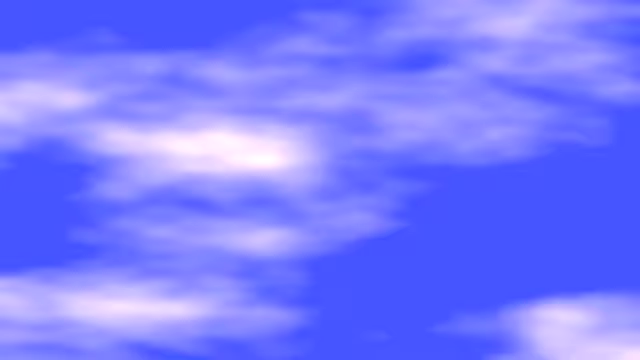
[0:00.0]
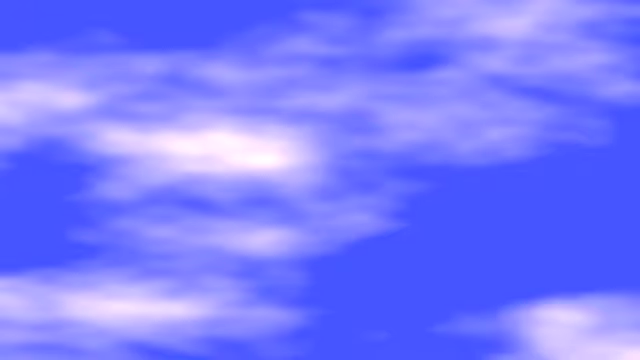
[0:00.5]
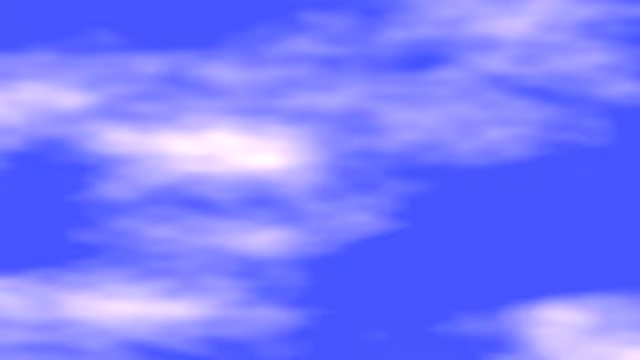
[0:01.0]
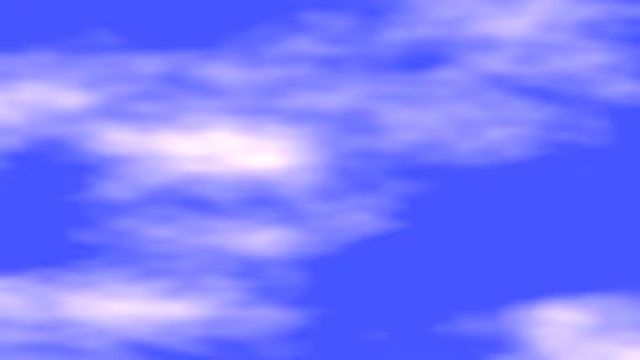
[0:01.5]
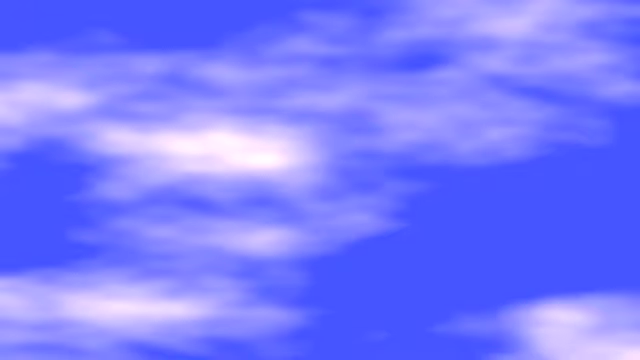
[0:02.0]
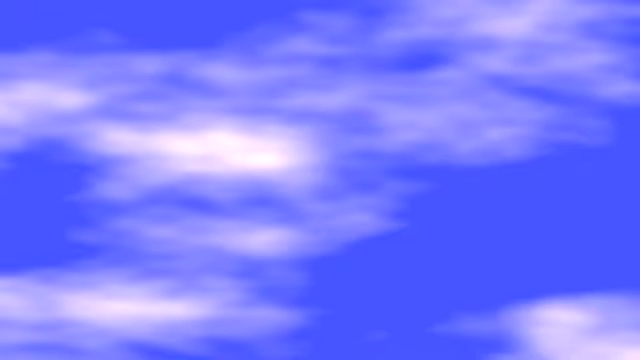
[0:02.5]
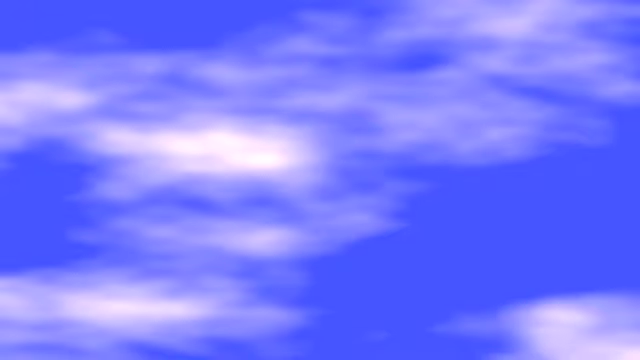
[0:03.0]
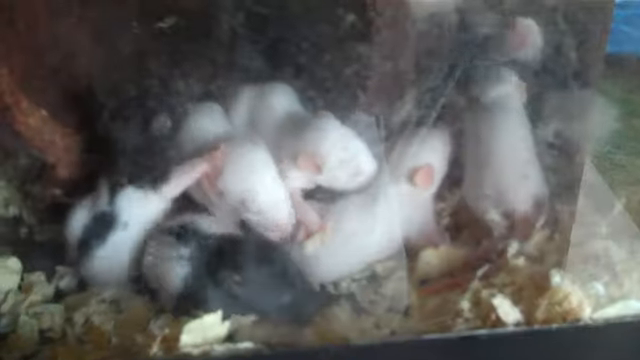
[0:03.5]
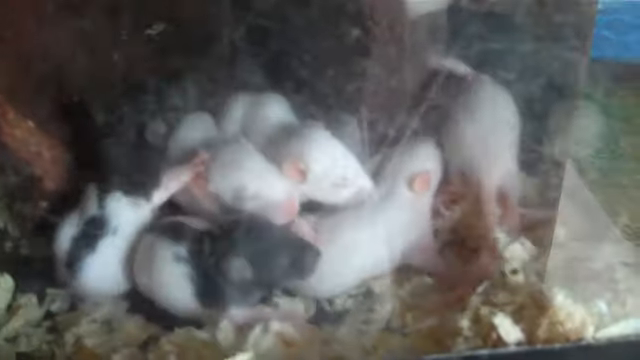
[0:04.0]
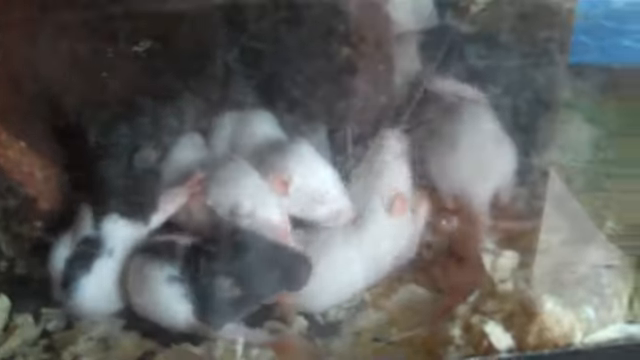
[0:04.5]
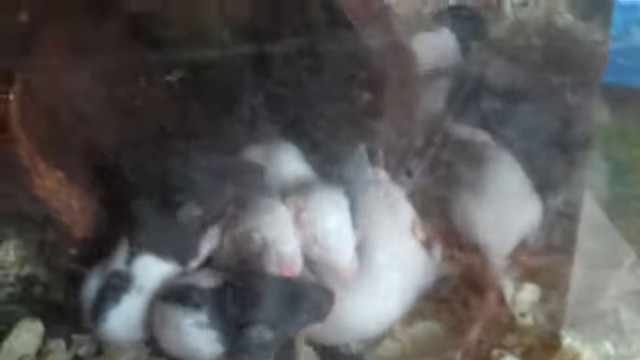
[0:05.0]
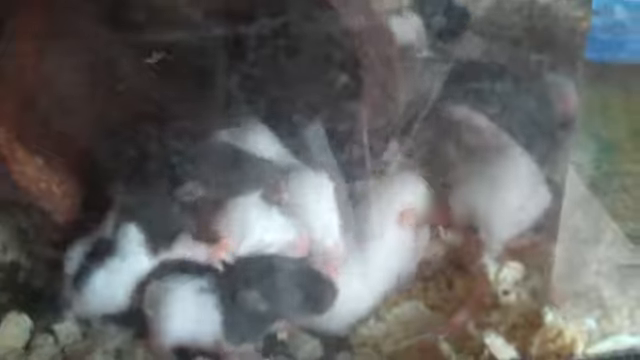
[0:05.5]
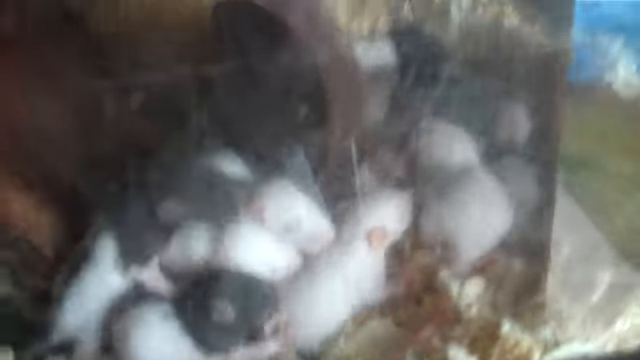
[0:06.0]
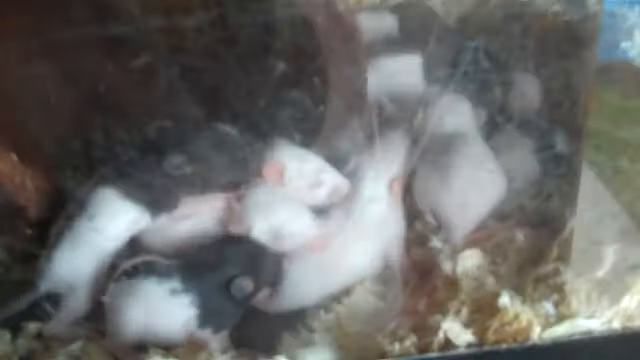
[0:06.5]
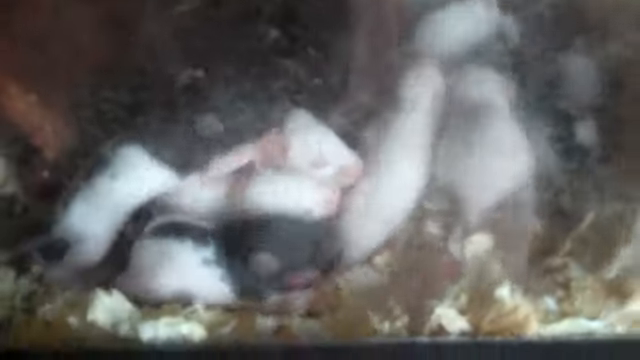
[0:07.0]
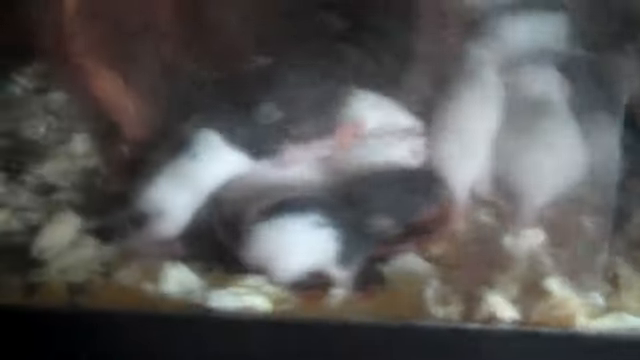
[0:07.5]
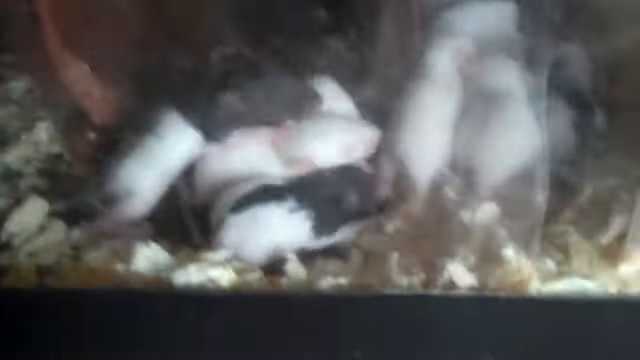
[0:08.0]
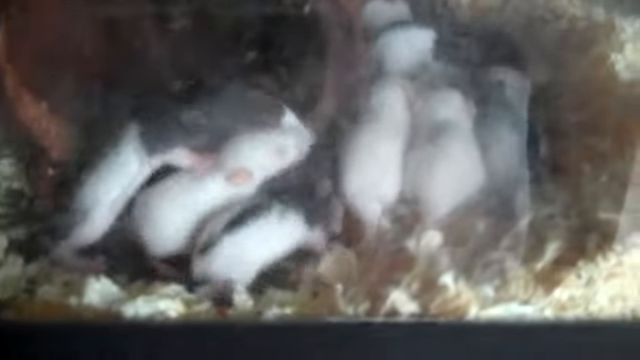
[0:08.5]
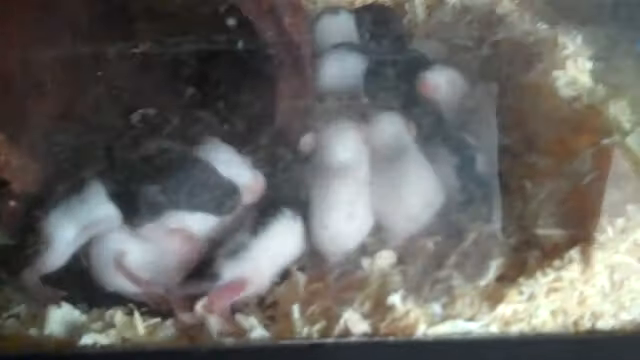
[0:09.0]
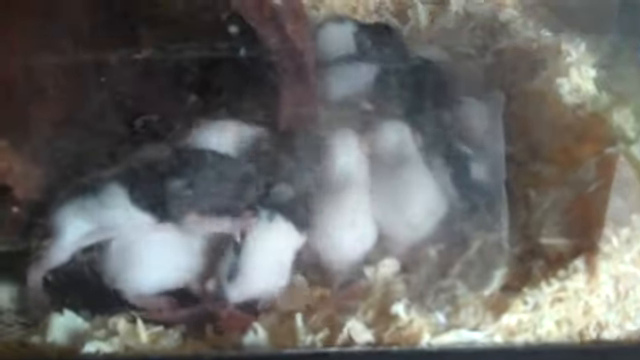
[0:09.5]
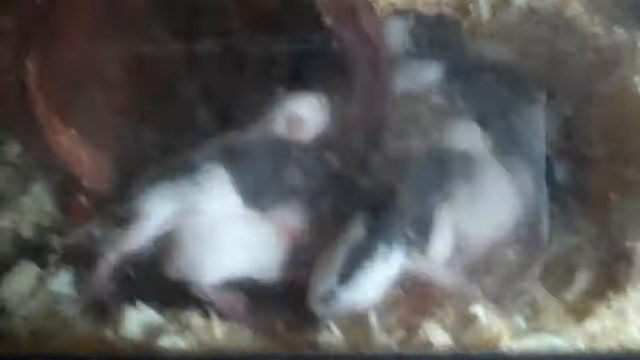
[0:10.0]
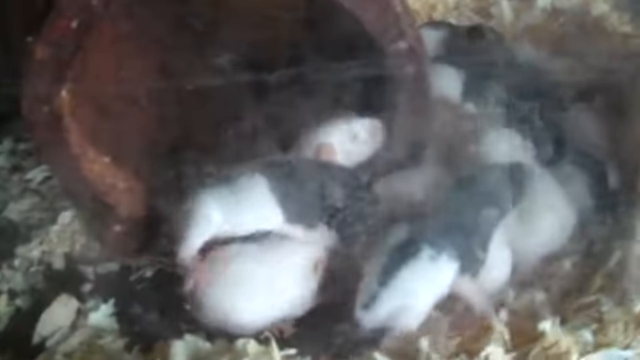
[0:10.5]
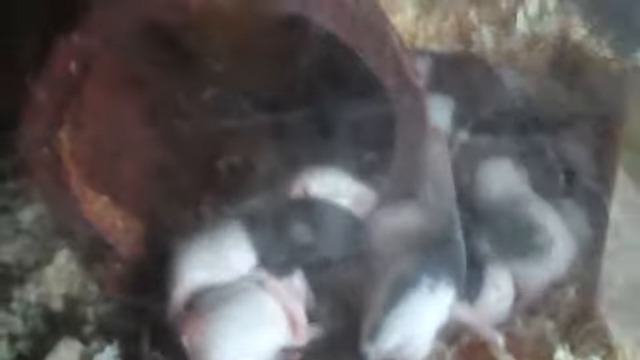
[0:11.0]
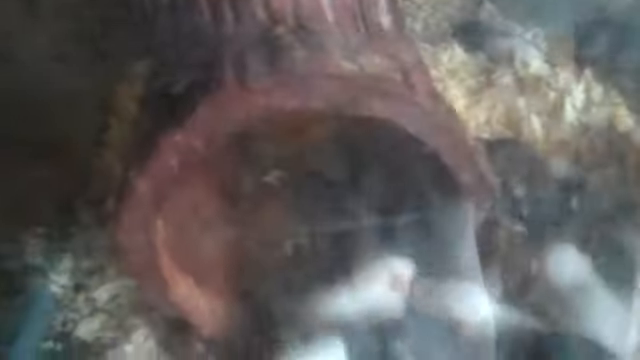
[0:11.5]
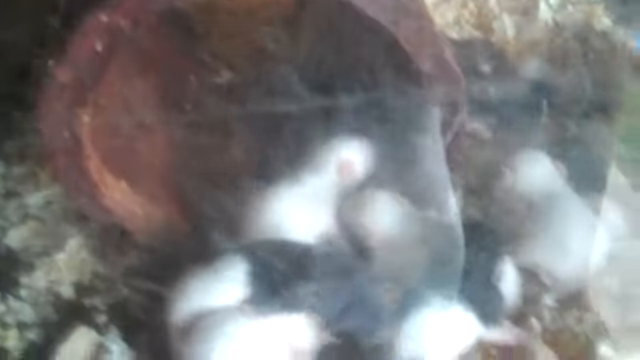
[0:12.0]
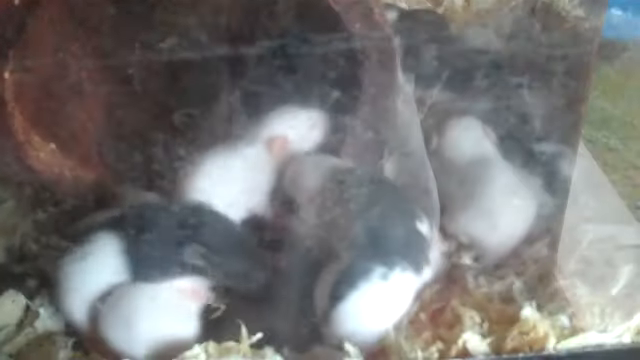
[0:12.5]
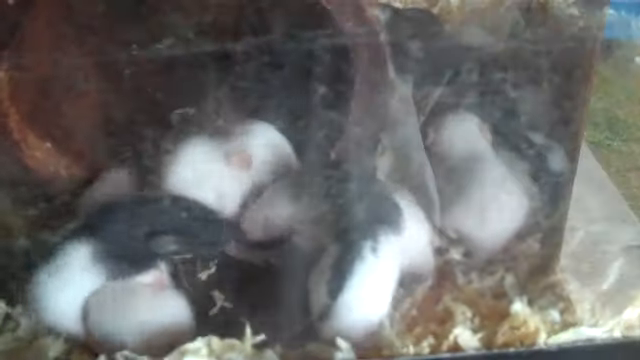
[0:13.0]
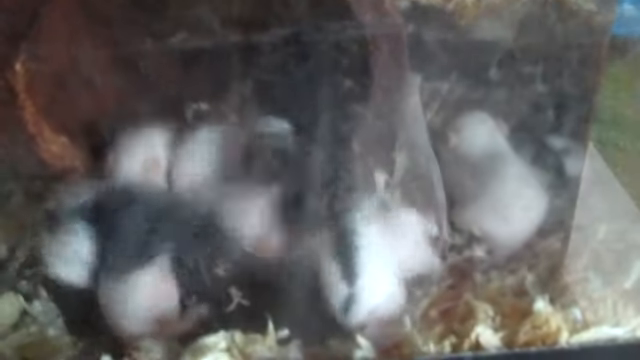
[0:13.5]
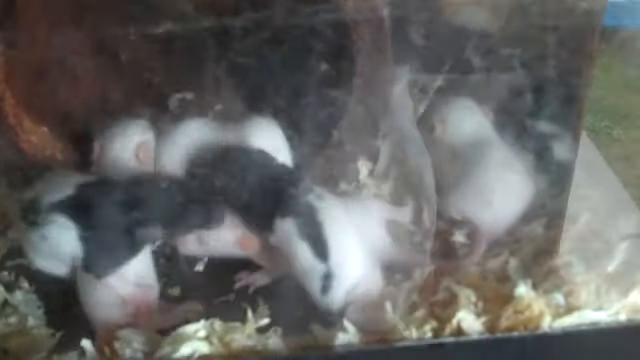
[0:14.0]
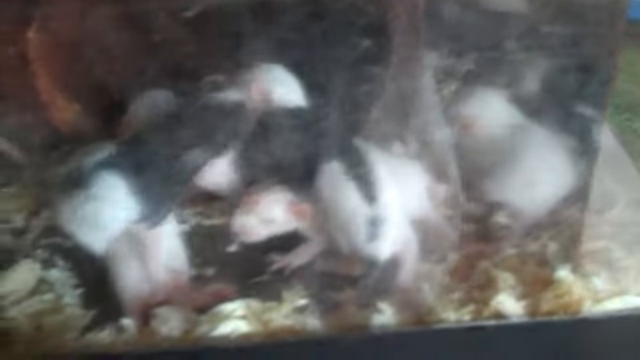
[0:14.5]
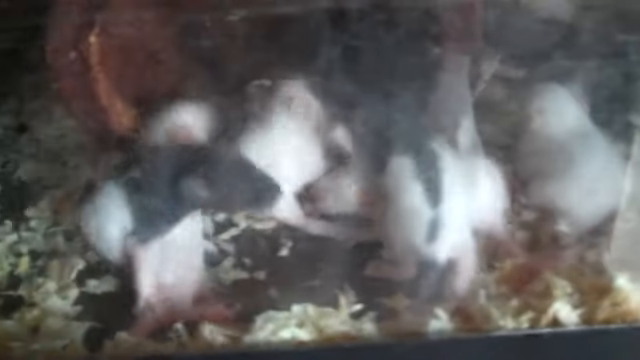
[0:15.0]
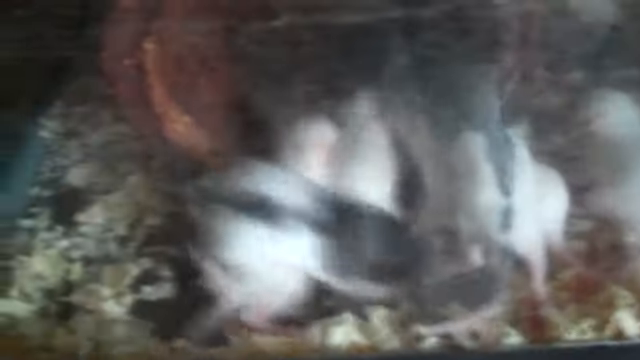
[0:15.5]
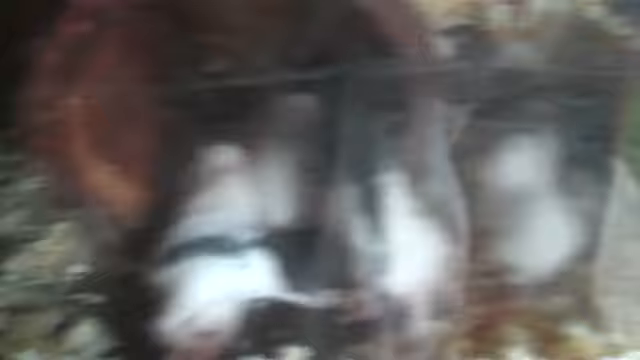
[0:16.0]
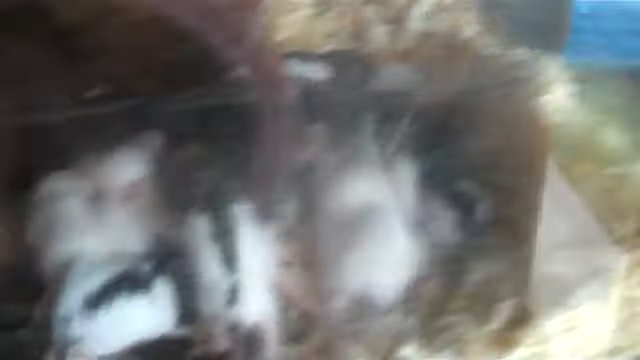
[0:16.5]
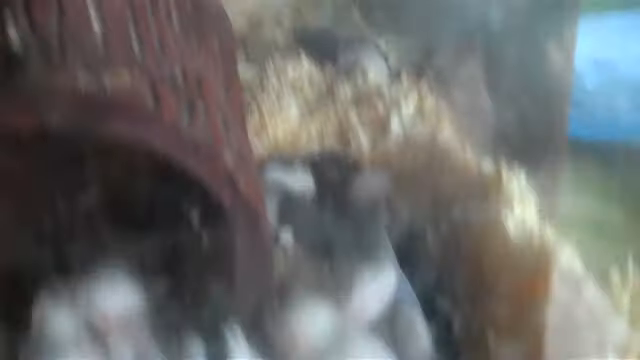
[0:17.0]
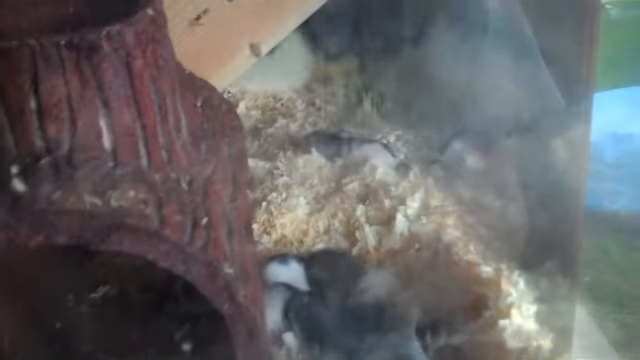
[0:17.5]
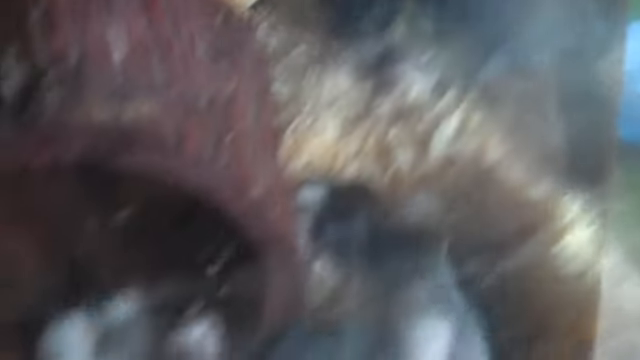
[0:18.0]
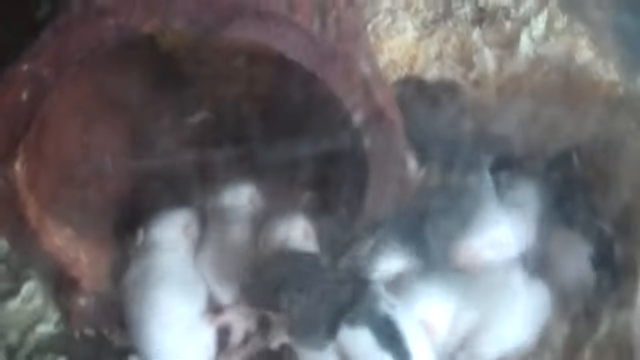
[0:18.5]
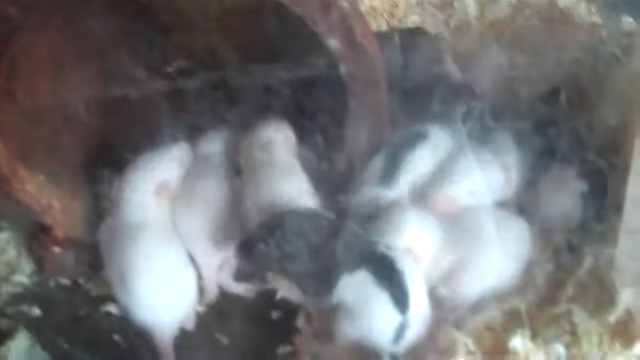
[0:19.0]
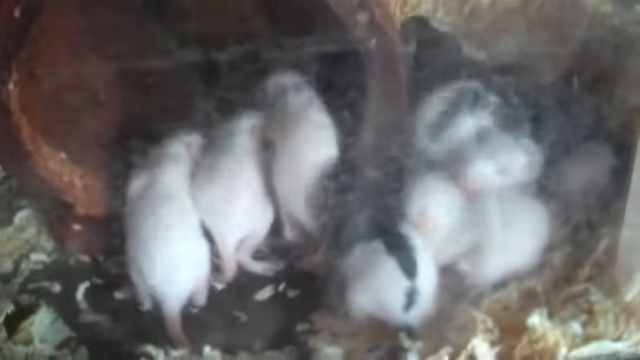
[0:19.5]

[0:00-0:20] A blue sky appears first. Then many very little creatures that look like little rats come into view; they seem to be trying to enter or come out of one hole. They have different colours: some are pure white and one is white and black. They move around blindly, climbing and mounting one another, and probably cannot see very well yet. Something that looks like the mother comes from somewhere, though it is not certain that it is the mother. The place where they are kept looks dark, and there is what looks like a round bucket, or maybe a brick, where they are.